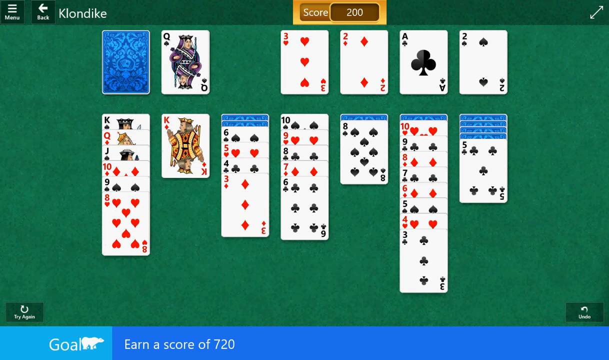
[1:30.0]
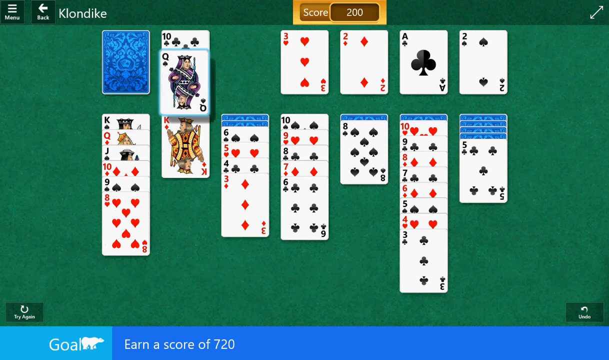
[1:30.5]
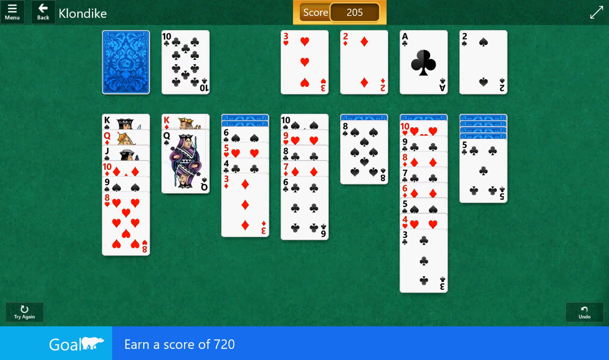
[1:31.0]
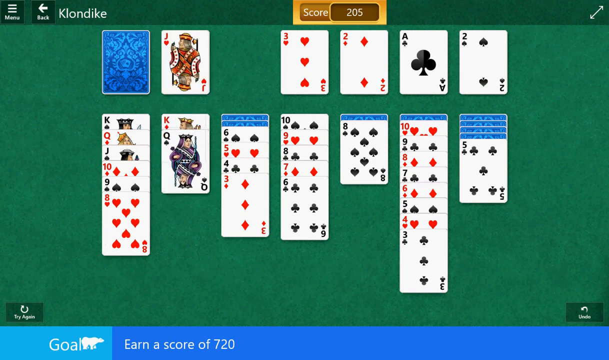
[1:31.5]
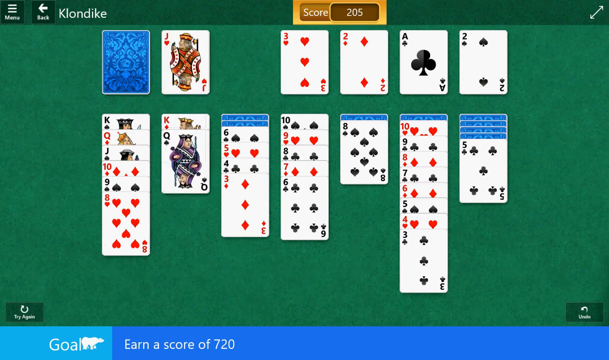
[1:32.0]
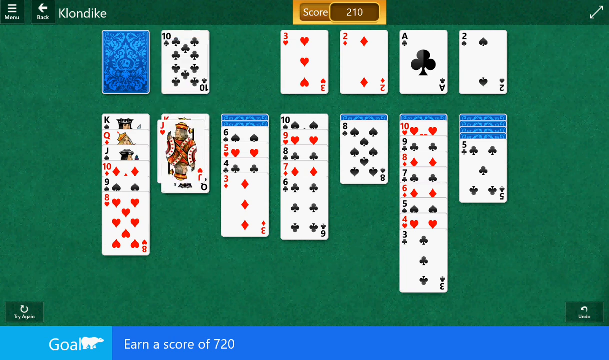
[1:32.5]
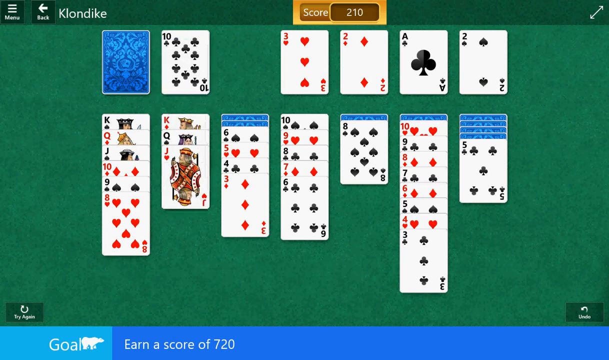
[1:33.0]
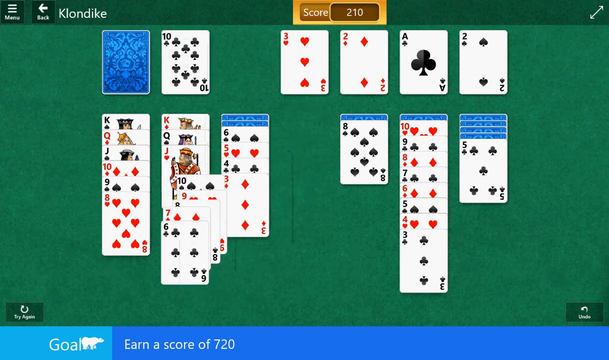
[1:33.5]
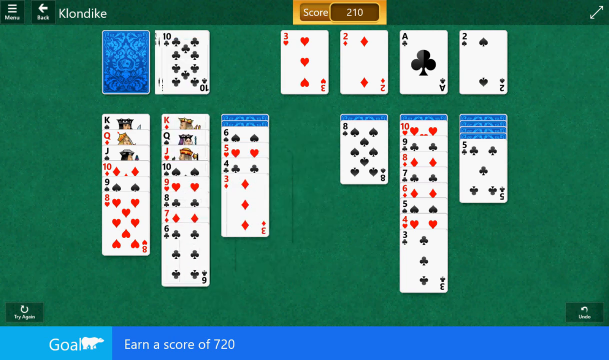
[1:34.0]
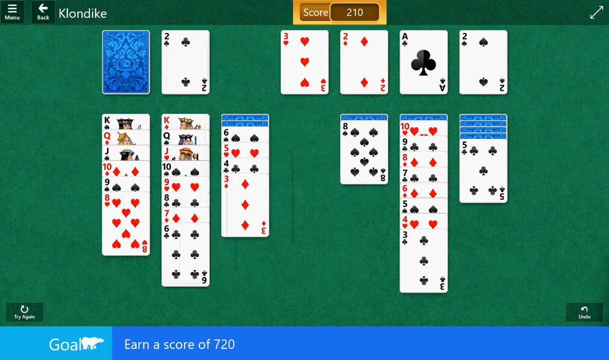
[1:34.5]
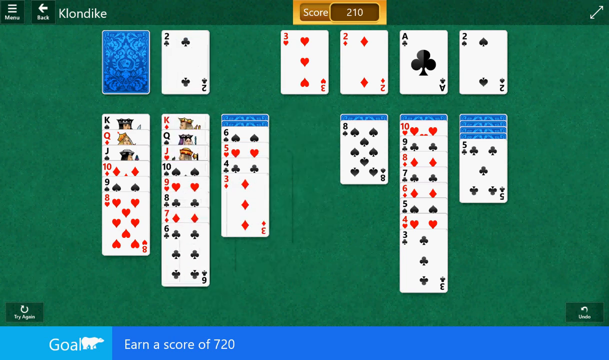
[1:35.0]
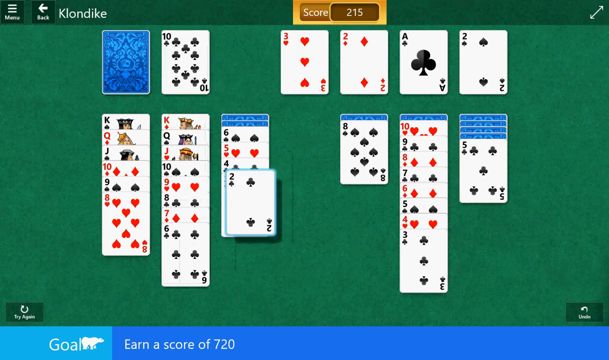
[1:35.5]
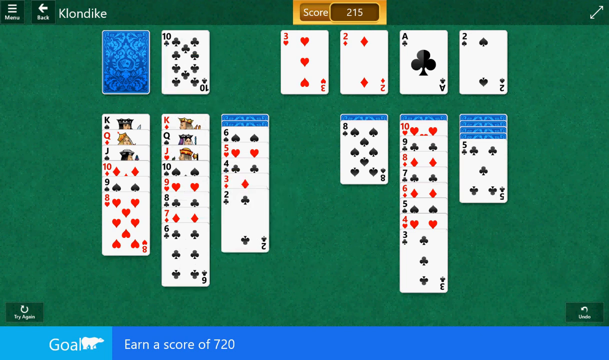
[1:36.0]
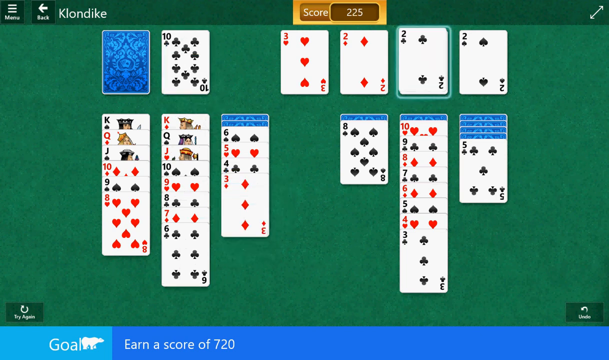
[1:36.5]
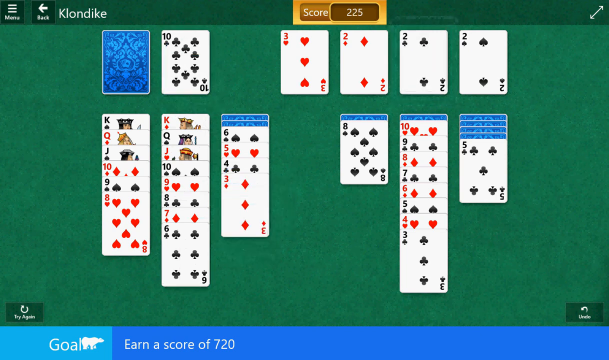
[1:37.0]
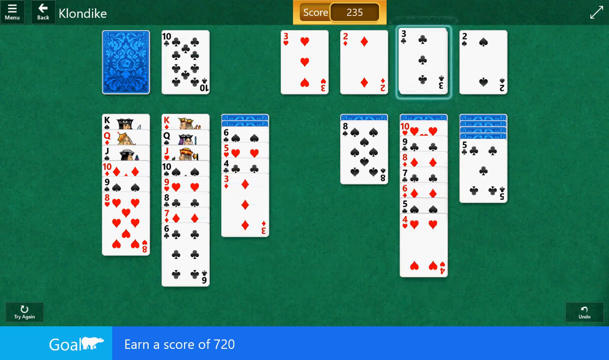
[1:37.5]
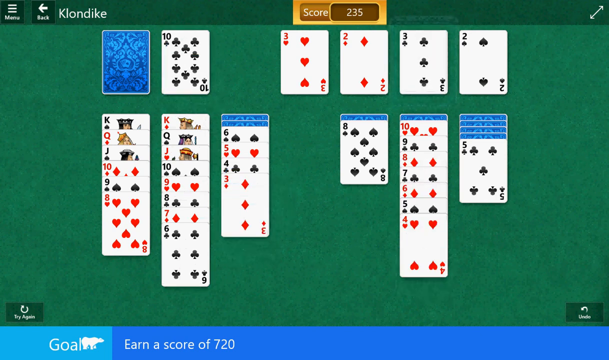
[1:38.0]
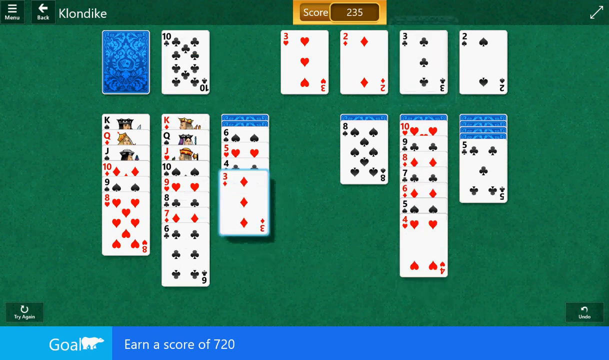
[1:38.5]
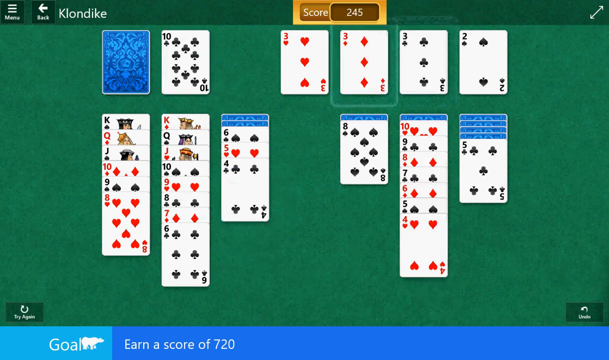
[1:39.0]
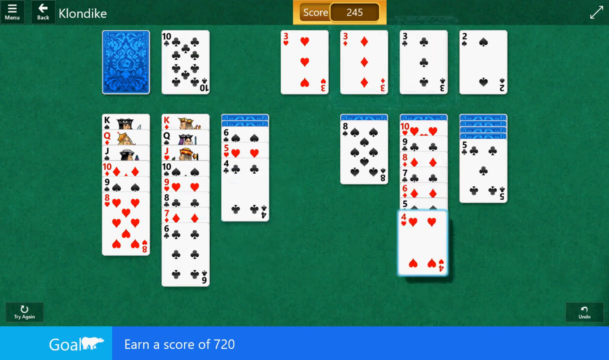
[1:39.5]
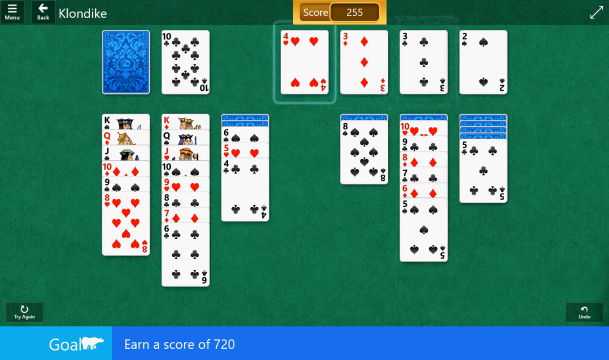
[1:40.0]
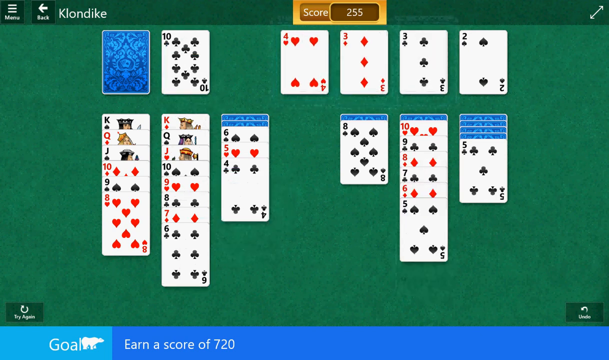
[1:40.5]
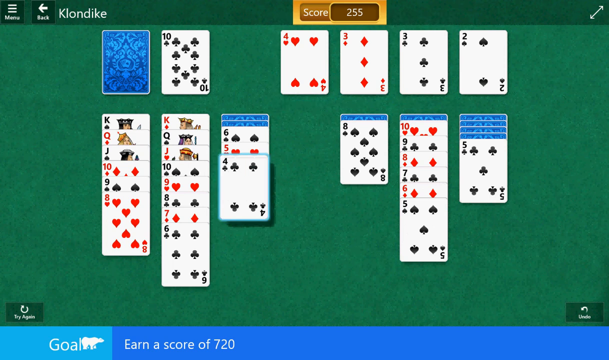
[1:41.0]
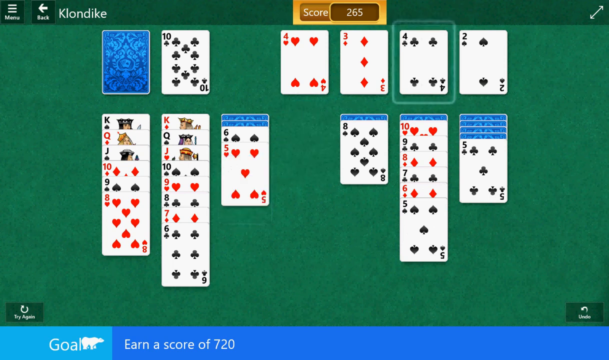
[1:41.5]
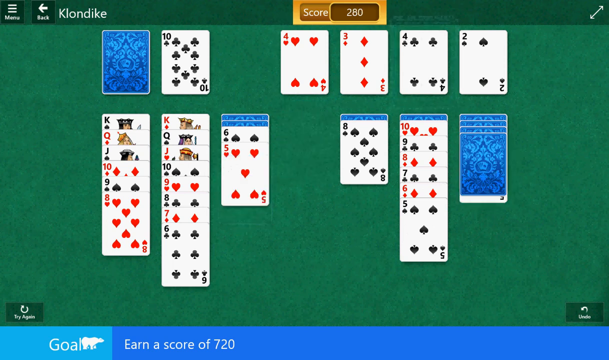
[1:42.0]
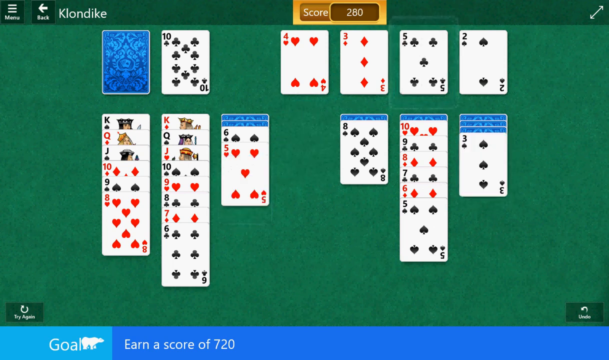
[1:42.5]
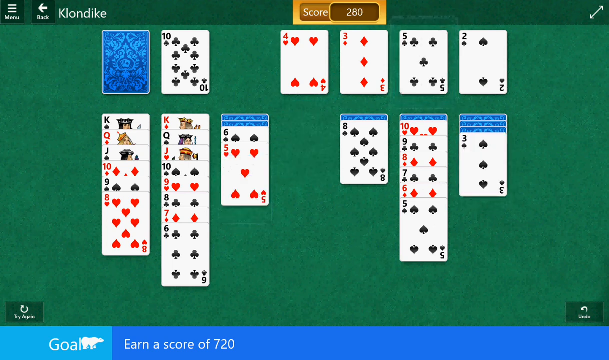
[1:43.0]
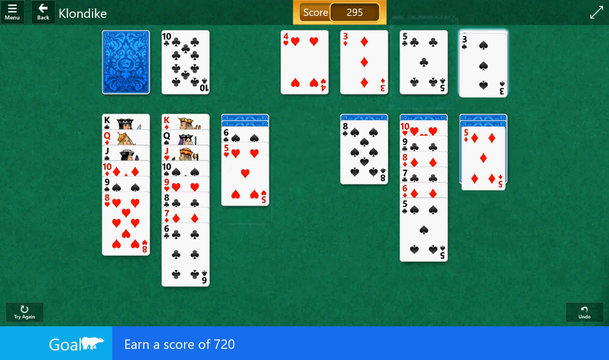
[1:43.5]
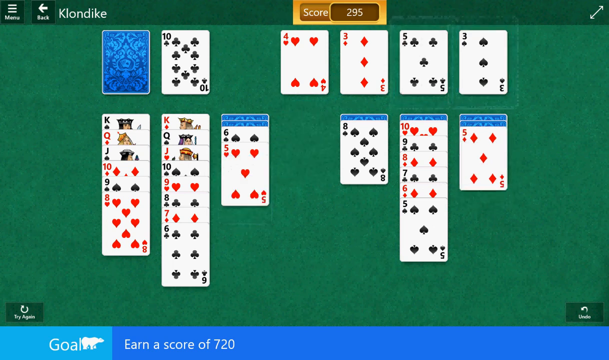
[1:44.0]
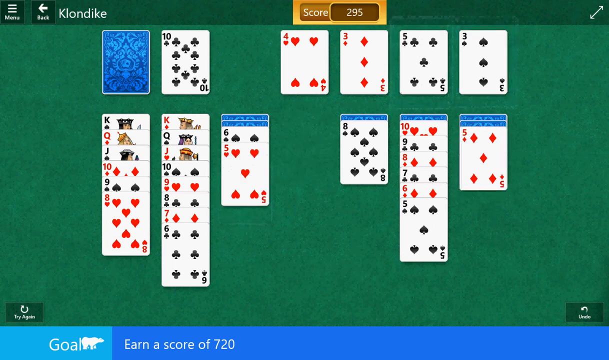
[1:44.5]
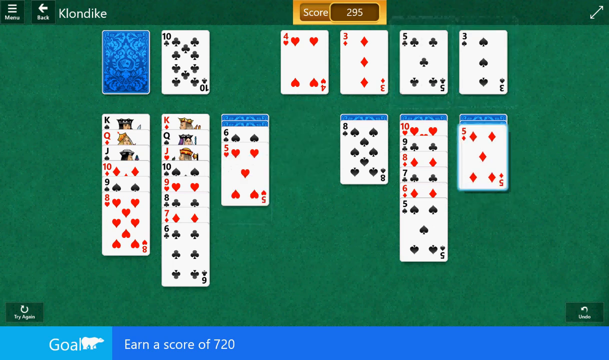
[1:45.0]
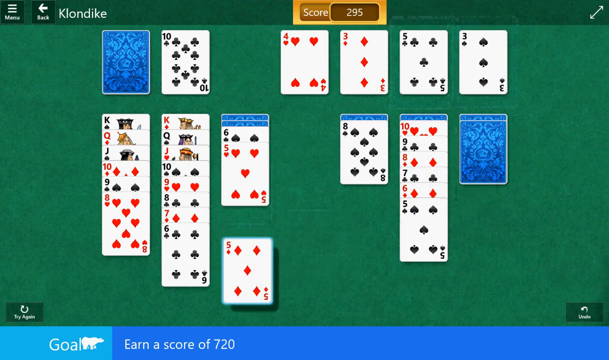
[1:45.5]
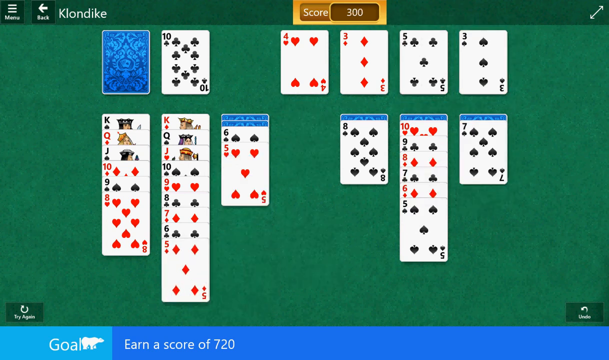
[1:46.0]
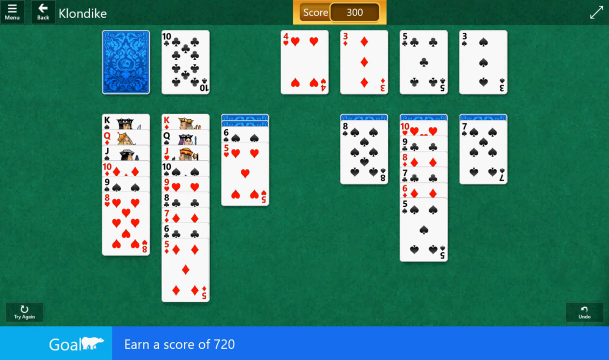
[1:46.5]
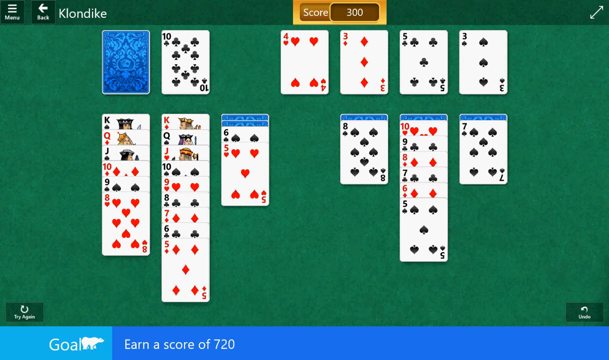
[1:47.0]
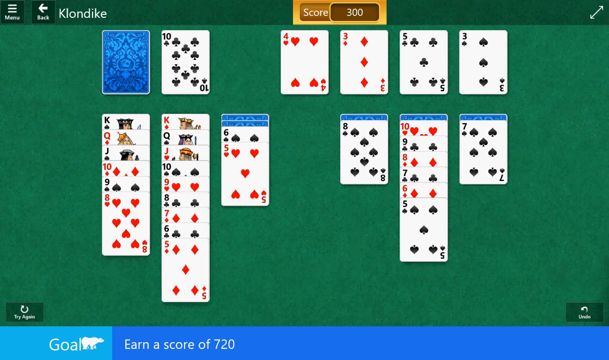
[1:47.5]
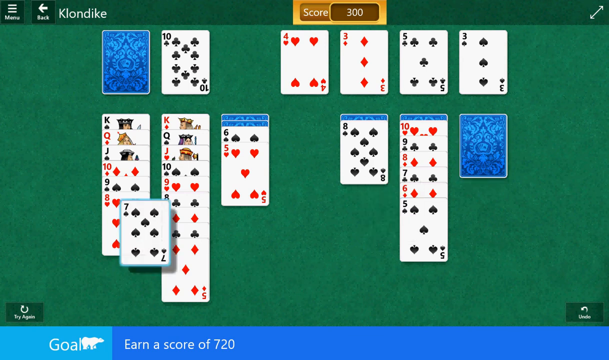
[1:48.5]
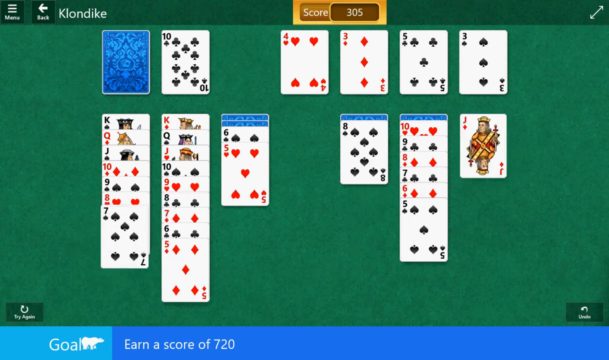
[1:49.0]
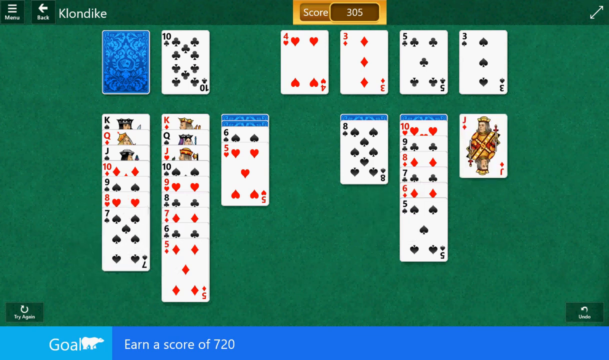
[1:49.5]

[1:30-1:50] A recording of someone's computer screen shows them playing a game called Klondike, with the name in the upper left corner beside a back button and a menu button. In the upper right corner is an arrow for making the screen full size. A deck with a blue paisley back lies blue side up, and right beside it is the discard pile. The four aces section is already filled, and seven piles are laid out, with cards being put up onto the aces in order. The whole background is green, and every time a card is moved to a spot, five points are earned.